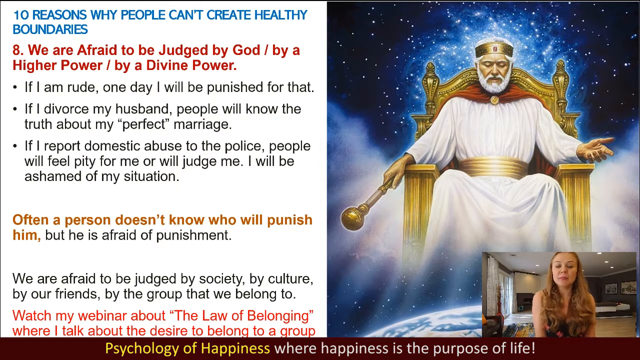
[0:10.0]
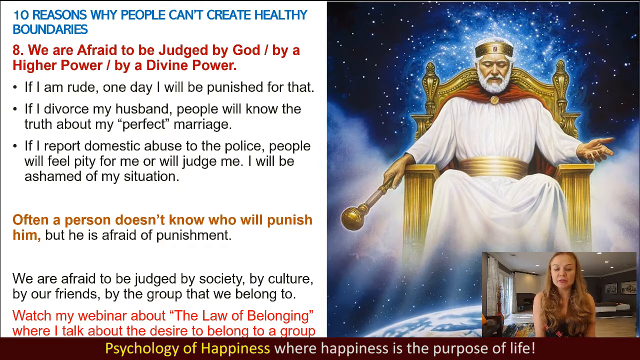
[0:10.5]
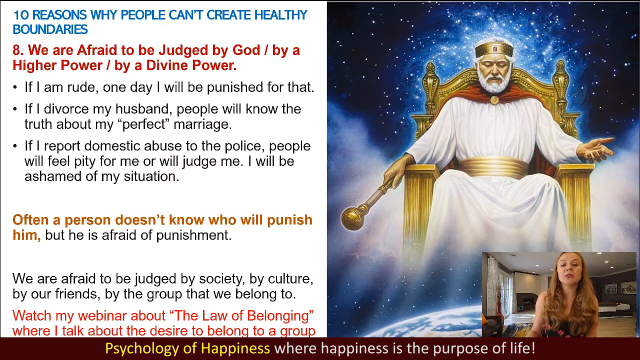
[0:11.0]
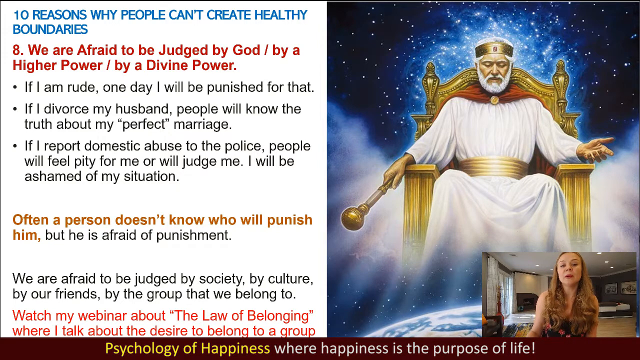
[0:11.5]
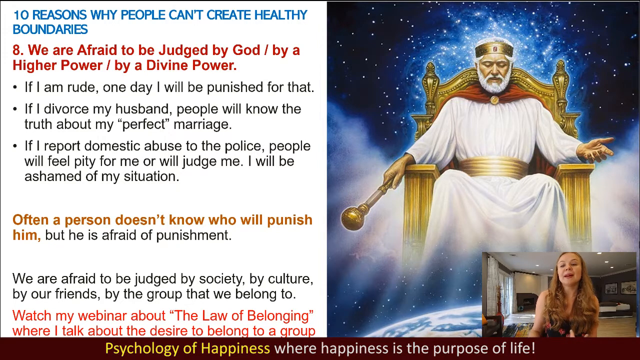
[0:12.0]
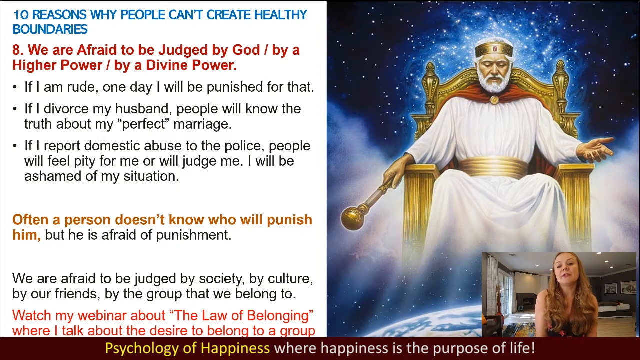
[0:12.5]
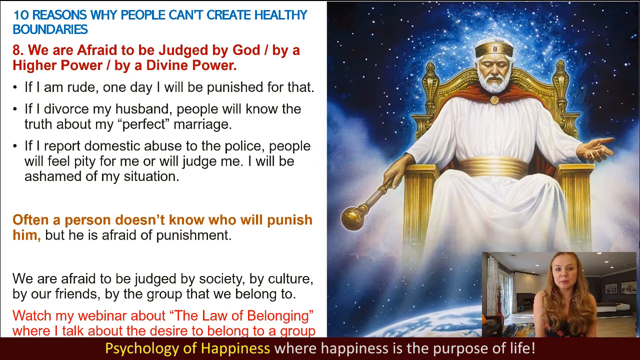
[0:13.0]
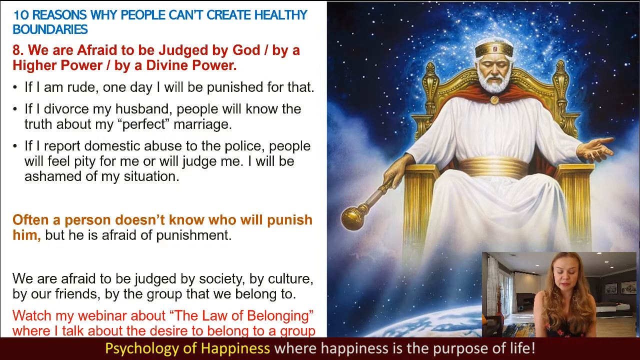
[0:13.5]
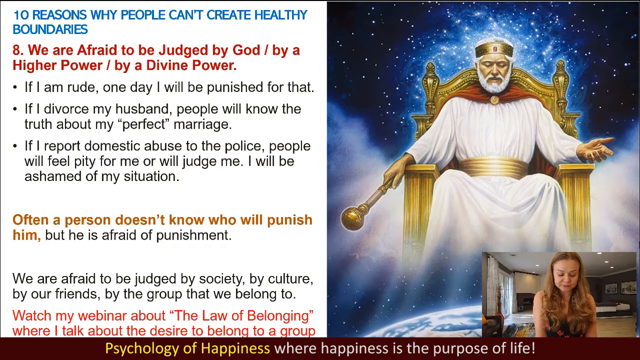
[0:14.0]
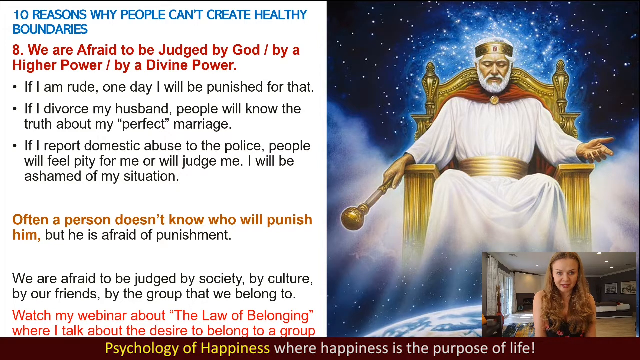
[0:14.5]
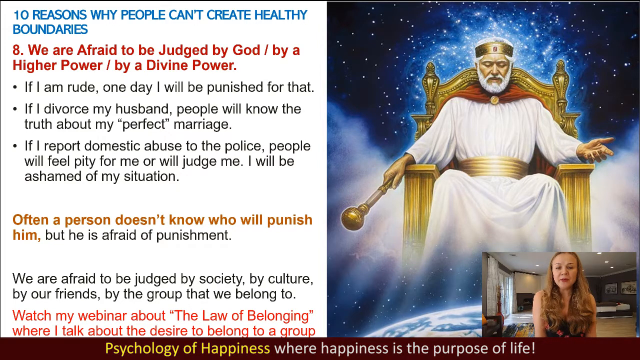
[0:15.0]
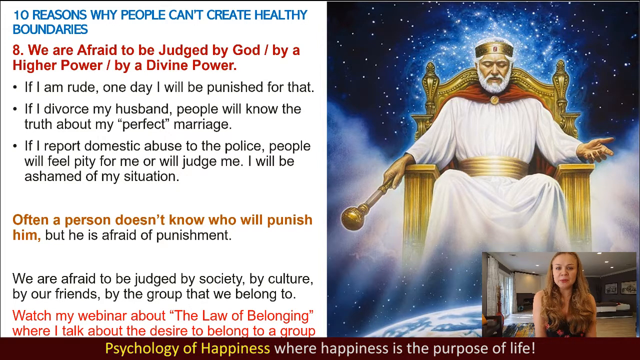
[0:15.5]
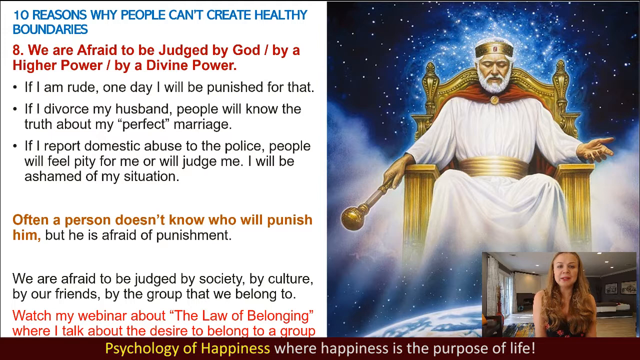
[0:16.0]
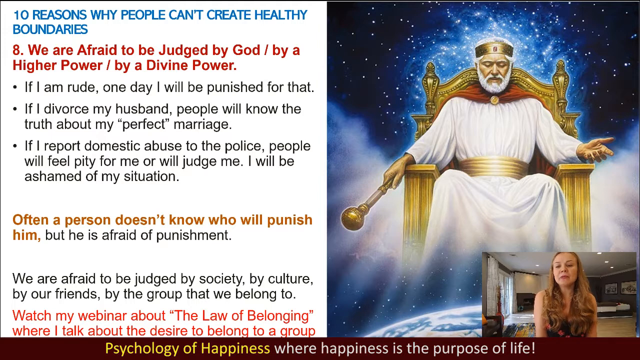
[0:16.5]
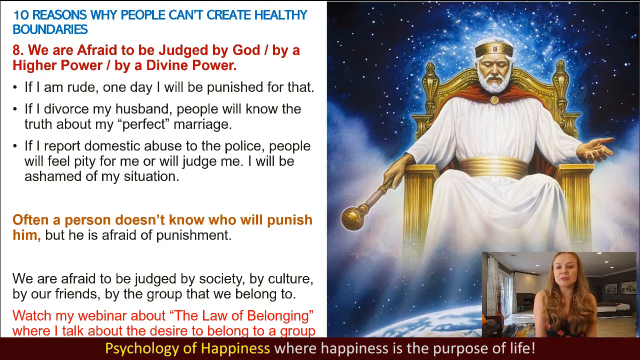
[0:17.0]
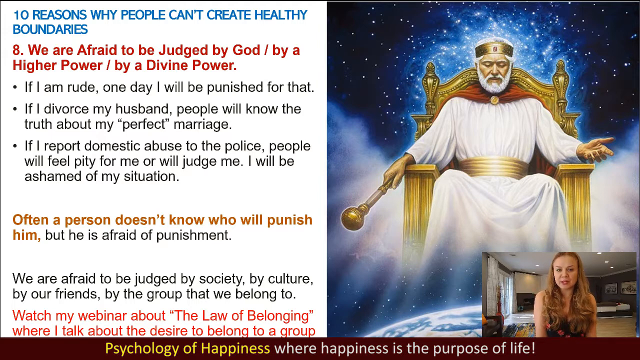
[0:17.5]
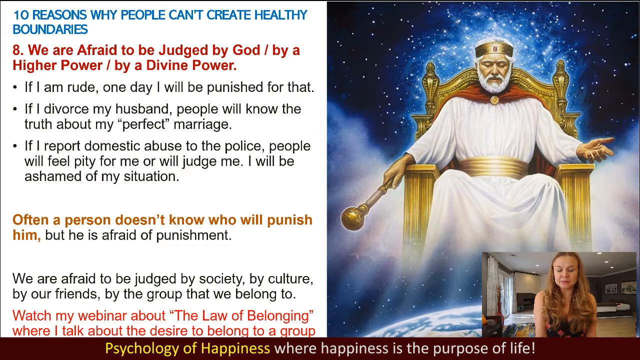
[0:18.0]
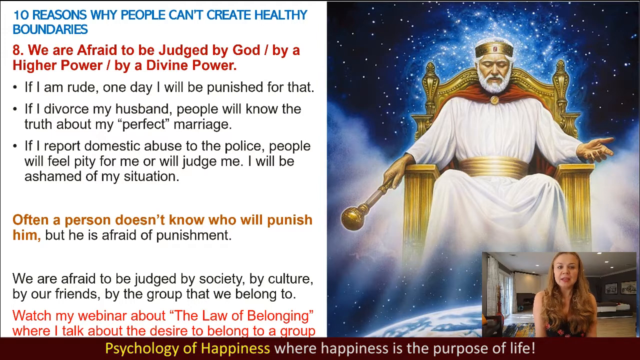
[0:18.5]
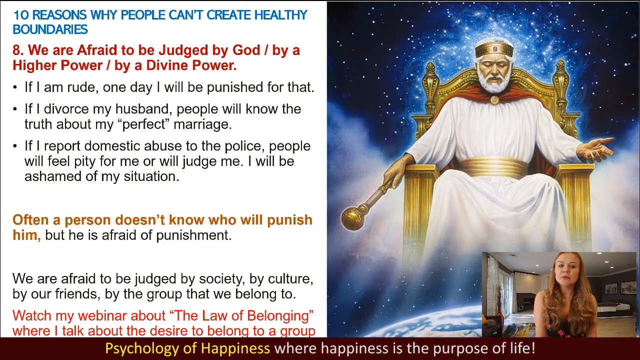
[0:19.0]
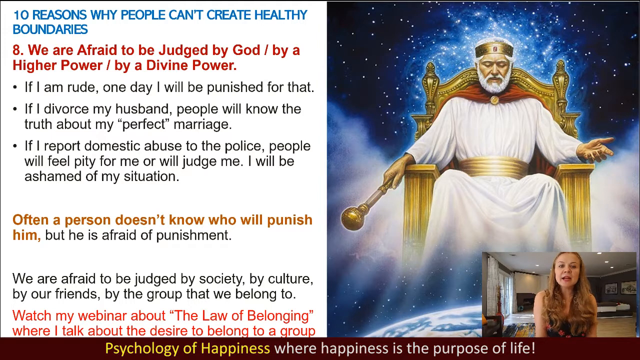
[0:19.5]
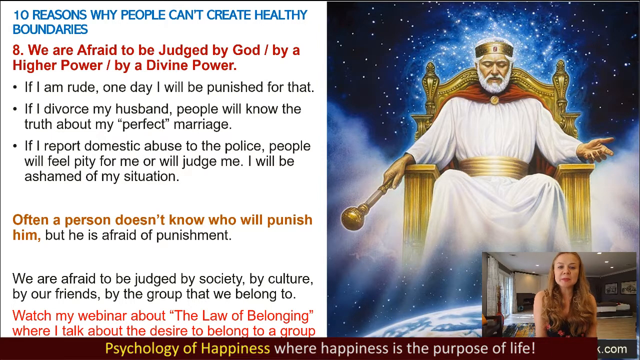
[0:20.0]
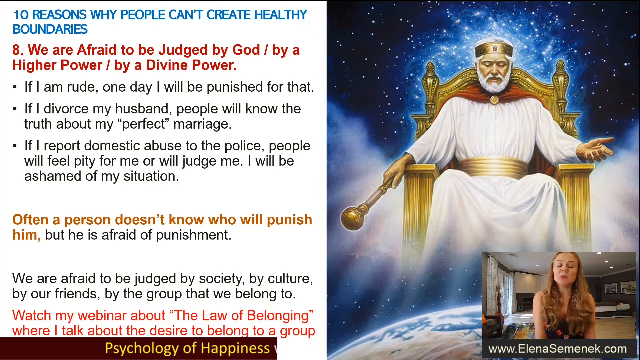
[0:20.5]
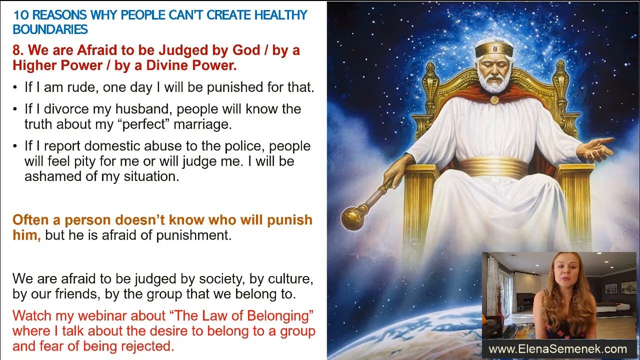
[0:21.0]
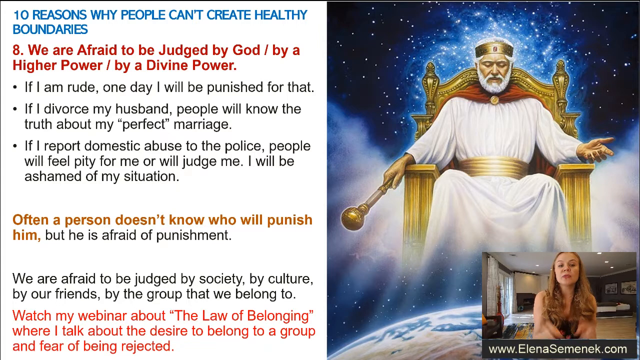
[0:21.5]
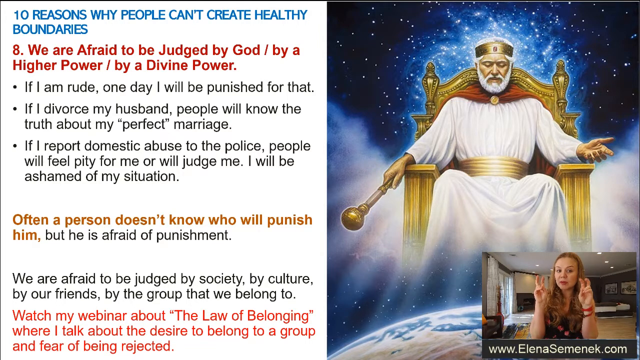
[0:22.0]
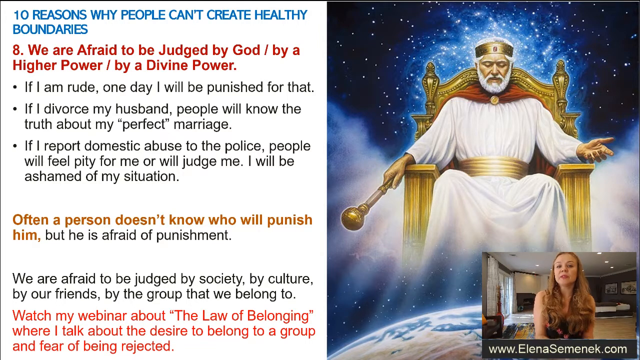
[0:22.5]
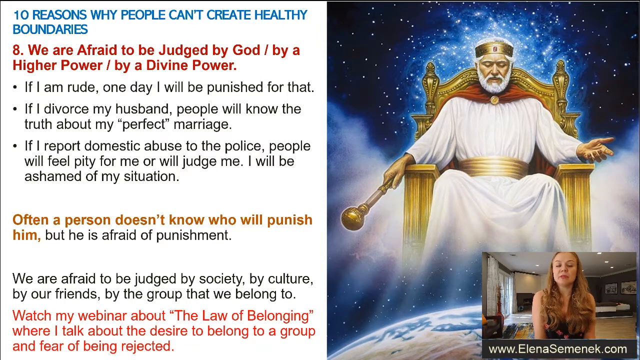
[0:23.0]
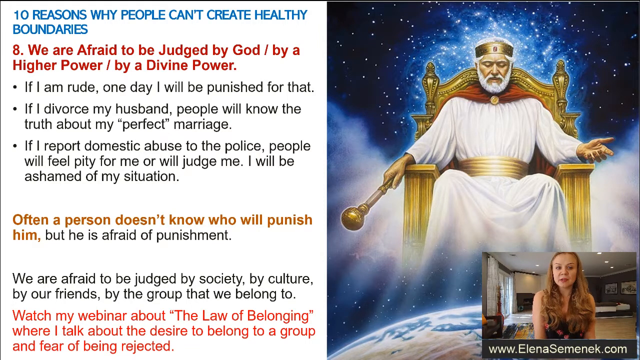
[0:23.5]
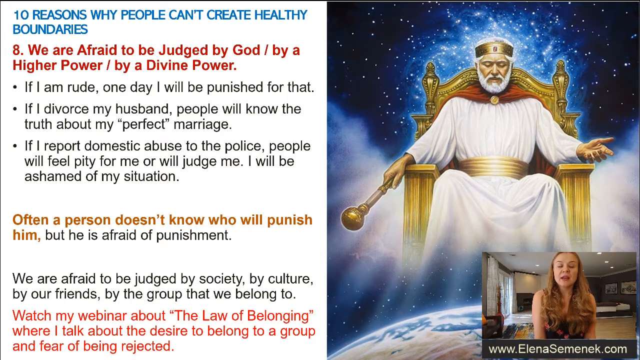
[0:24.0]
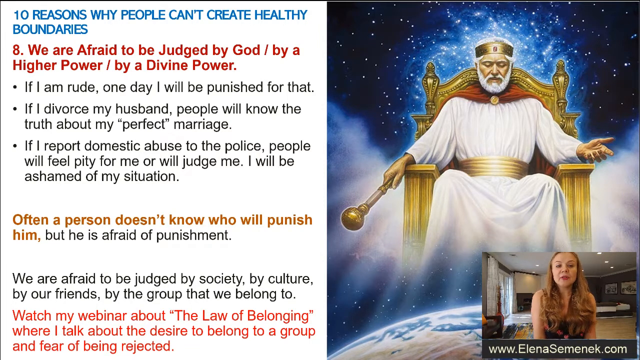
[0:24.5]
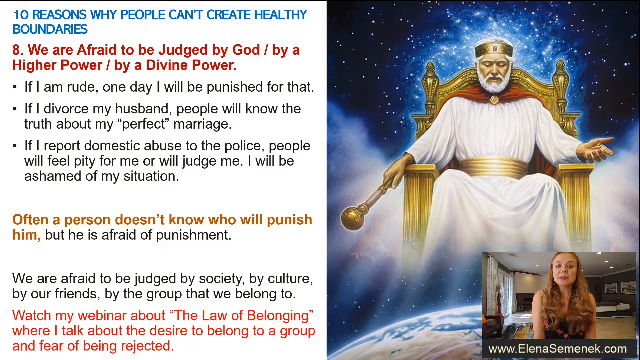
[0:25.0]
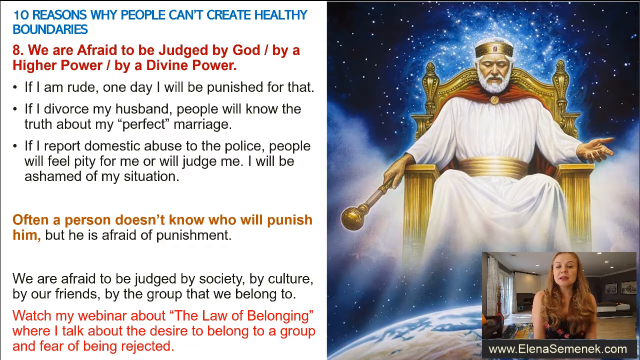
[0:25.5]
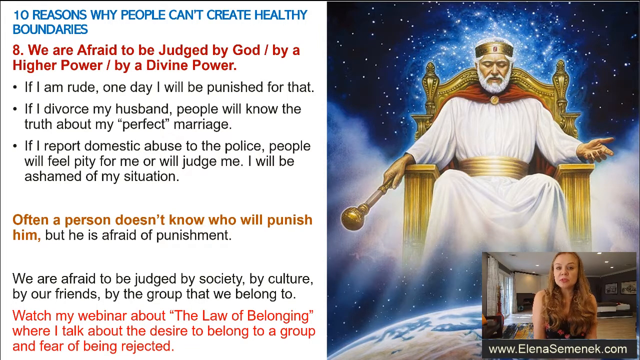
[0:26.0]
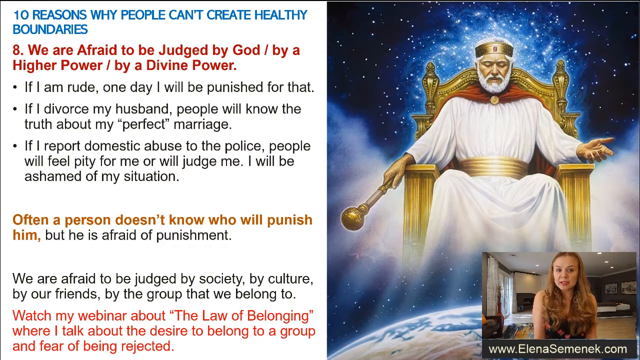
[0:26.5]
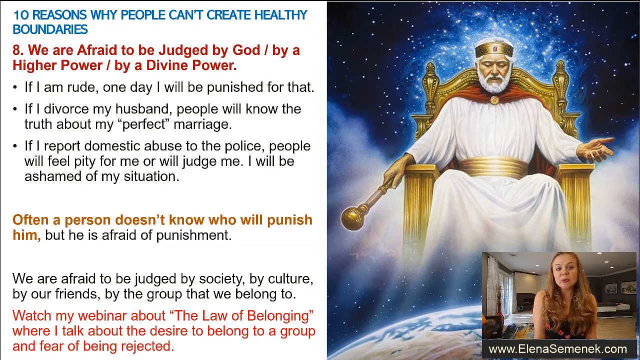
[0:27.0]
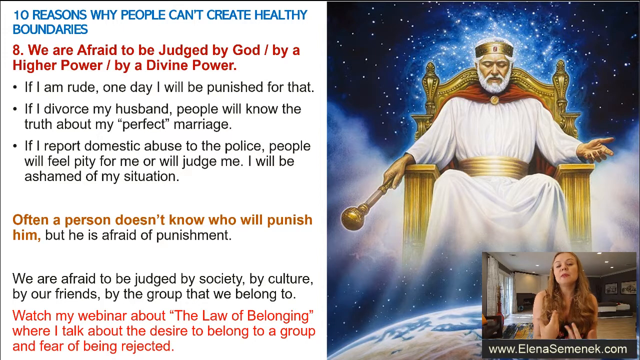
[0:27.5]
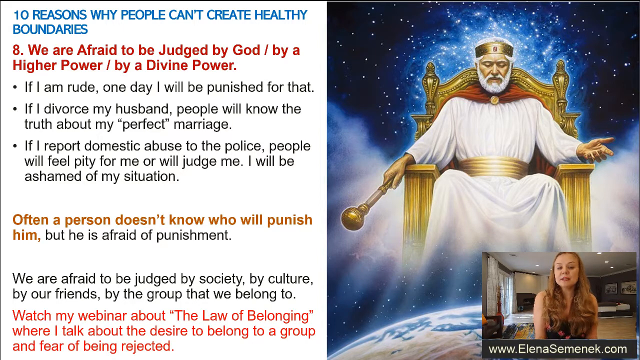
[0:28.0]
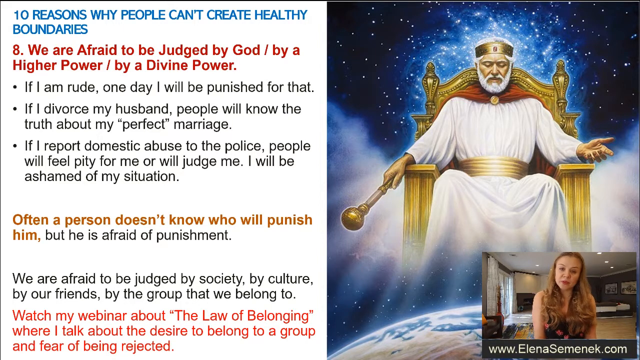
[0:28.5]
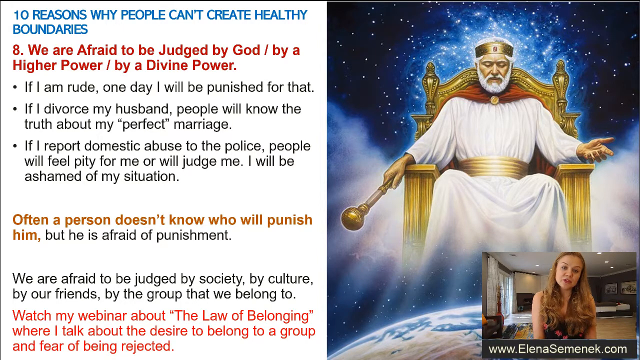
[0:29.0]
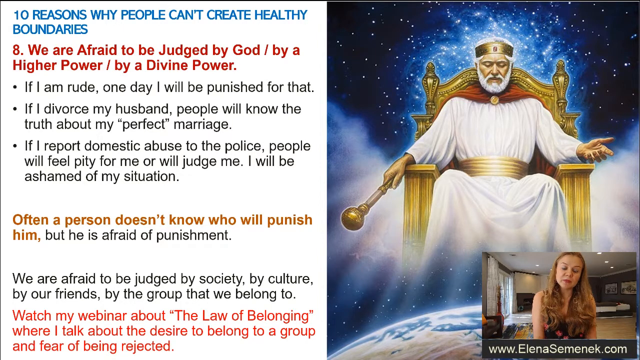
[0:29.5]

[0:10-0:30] The screen is split in half: the left side is filled with writing and the right side is a huge picture. In the bottom right-hand corner is another live video screen in which a woman speaks while looking directly into the camera. Along the bottom of that video it says "www.elinaseminic.com". She is in a room with white walls and a hardwood floor. Above her, on the right half of the screen, is a picture of a large golden throne. Sitting on it is a man in a white robe with a gold belt, holding a golden spear in his right hand. He wears a crown and has a thick white beard, white mustache and white hair. Behind him is outer space, showing only darkness and stars. The left side of the screen reads: "10 reasons why people can't create healthy boundaries. 8 We are afraid to be judged by God, by a higher power, by a divine power. If I am rude, one day I will be punished for that. If I divorce my husband, people will know the truth about my perfect marriage. If I report domestic abuse to the police, people will feel pity for me or will judge me. I will be ashamed of my situation." Underneath that it reads "Often a person doesn't know who will punish him, but he is afraid of punishment," and below that, "We are afraid to be judged by society, by culture, by our friends, by the group that we belong to." Underneath, written in red, it says "Watch my webinar about the law of belonging, where I talk about the desire to belong to a group." A brown strip then appears along the whole bottom of the screen, reading "Psychology of happiness, where happiness is the purpose of life."